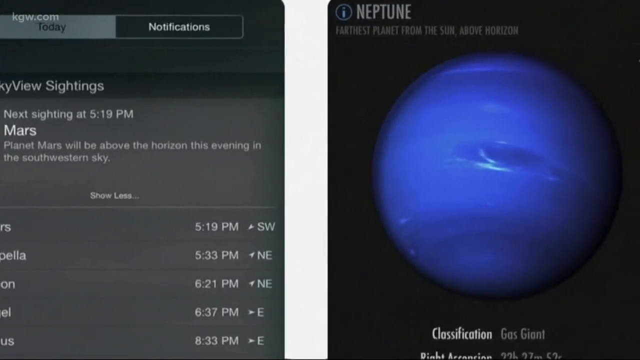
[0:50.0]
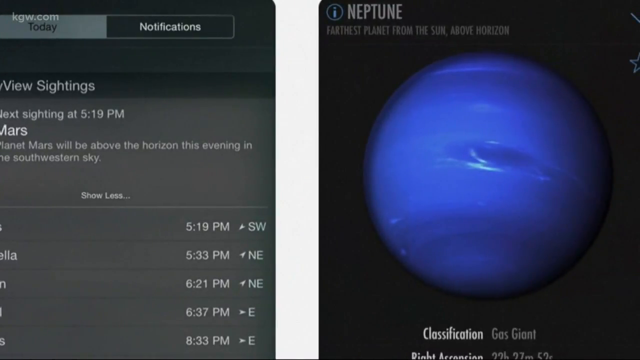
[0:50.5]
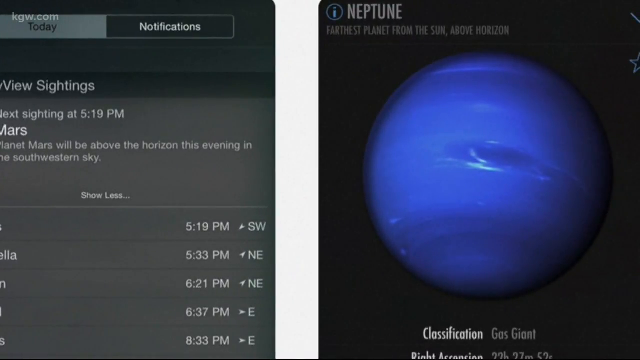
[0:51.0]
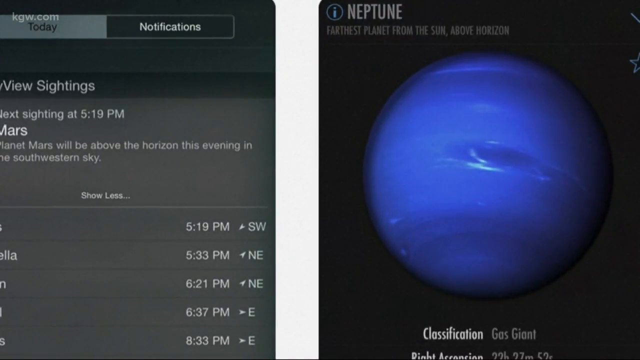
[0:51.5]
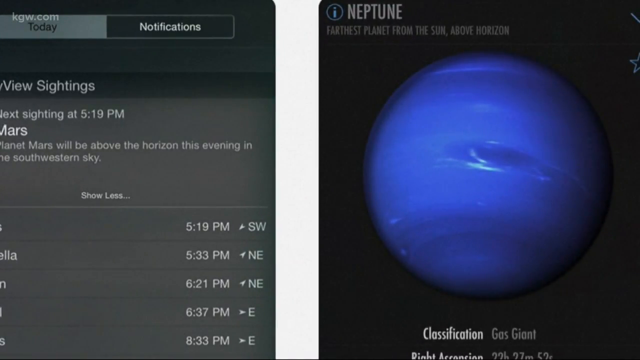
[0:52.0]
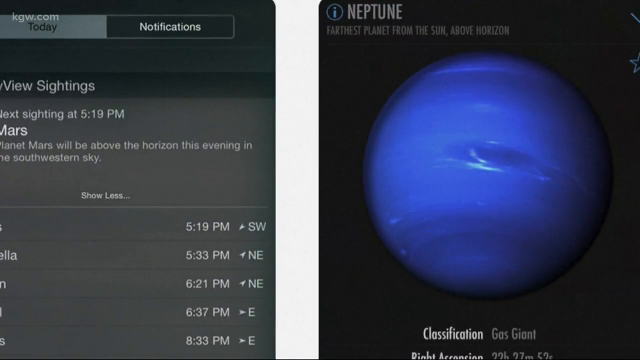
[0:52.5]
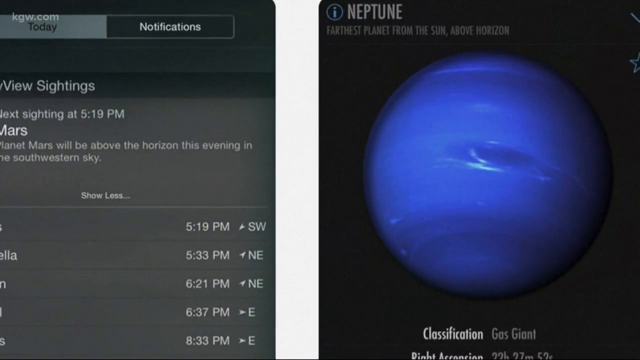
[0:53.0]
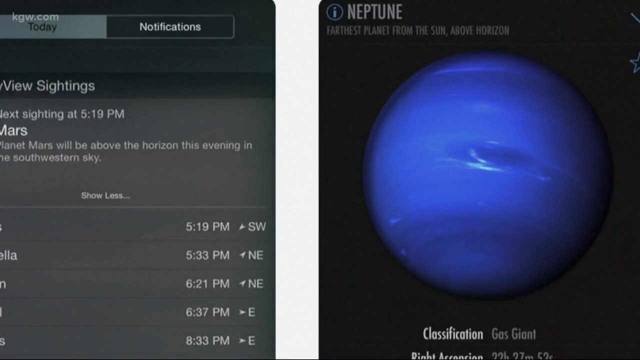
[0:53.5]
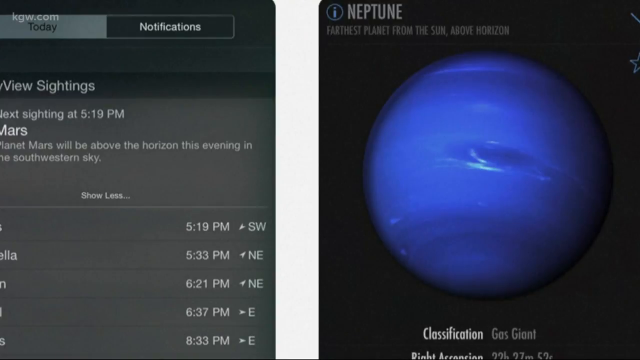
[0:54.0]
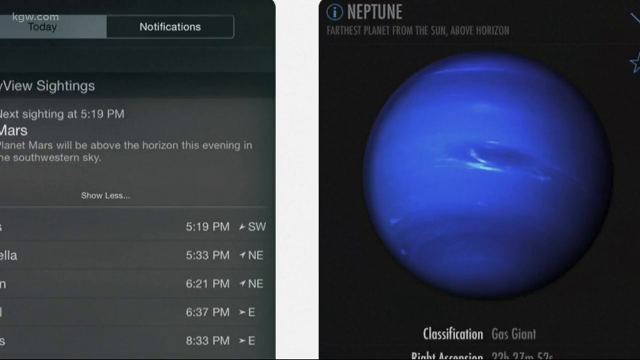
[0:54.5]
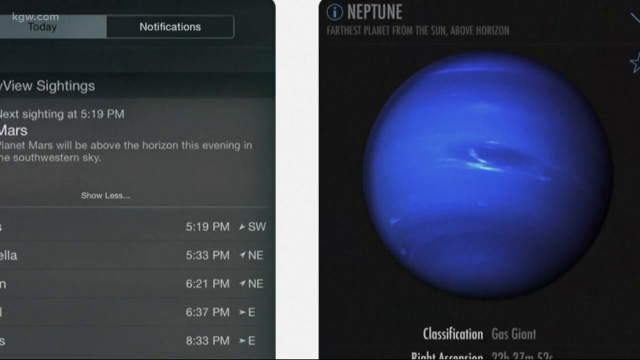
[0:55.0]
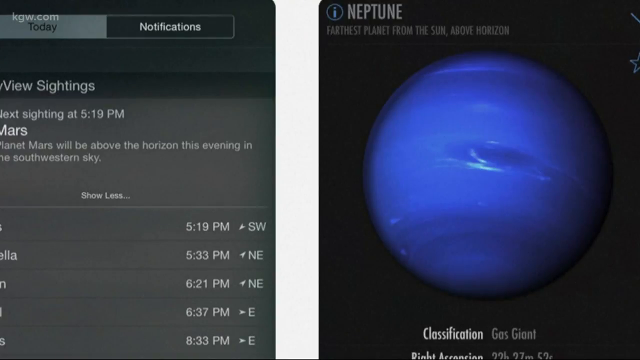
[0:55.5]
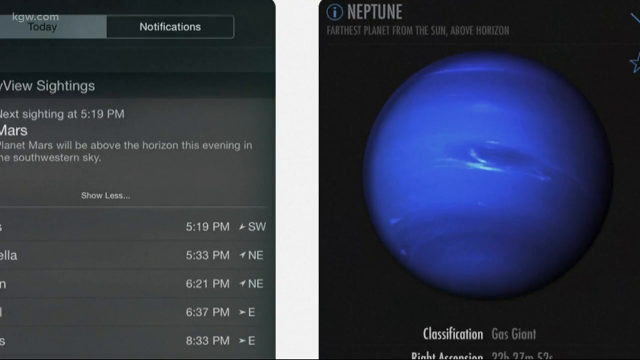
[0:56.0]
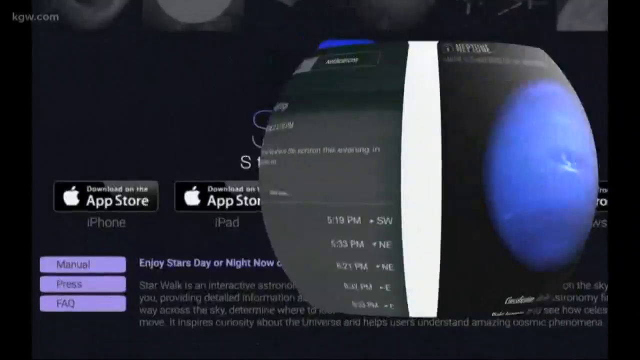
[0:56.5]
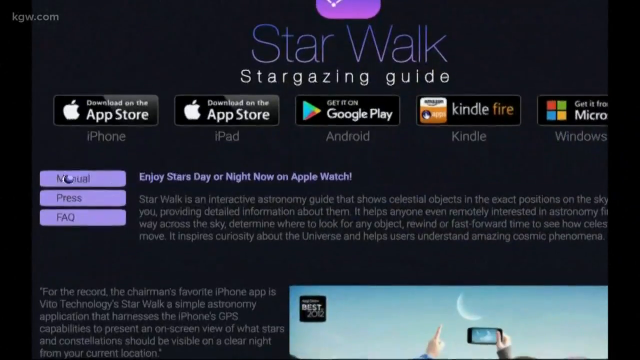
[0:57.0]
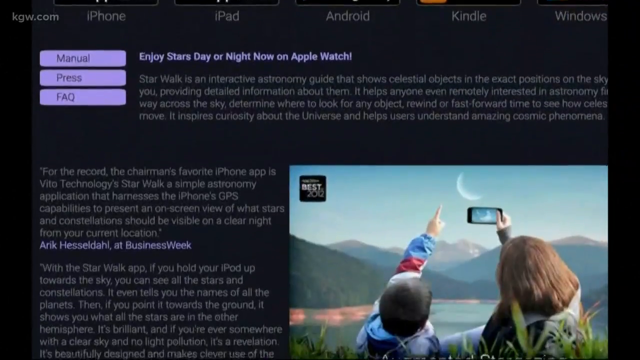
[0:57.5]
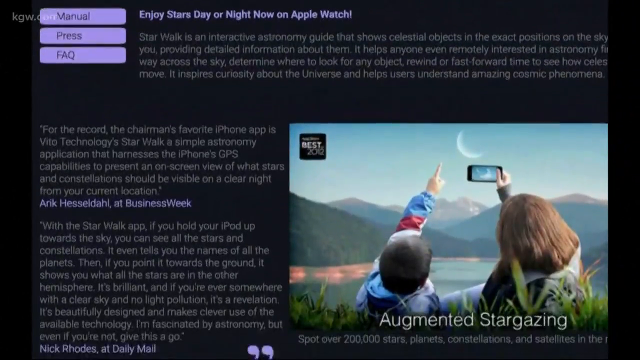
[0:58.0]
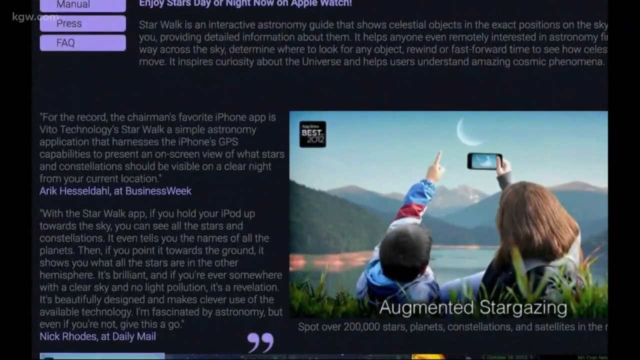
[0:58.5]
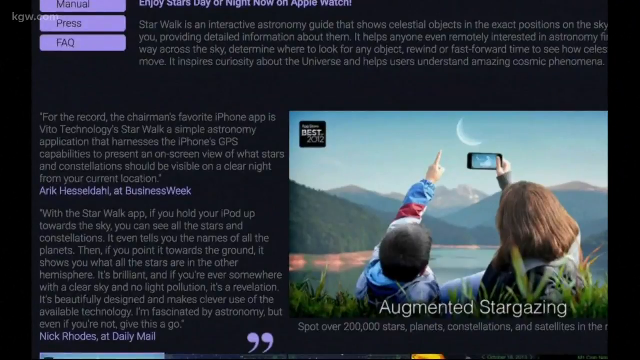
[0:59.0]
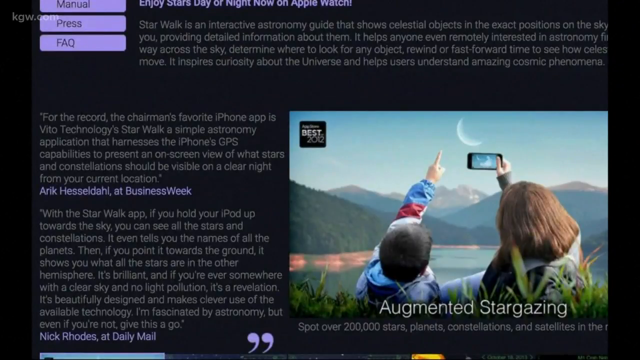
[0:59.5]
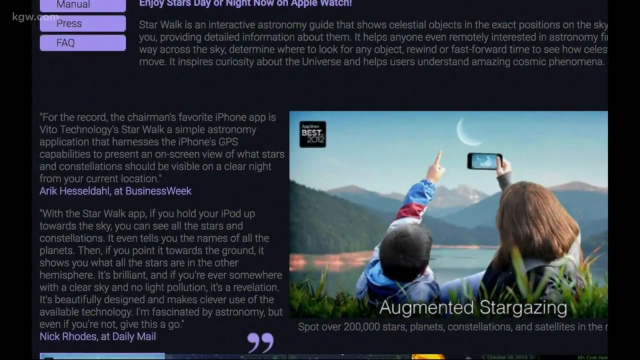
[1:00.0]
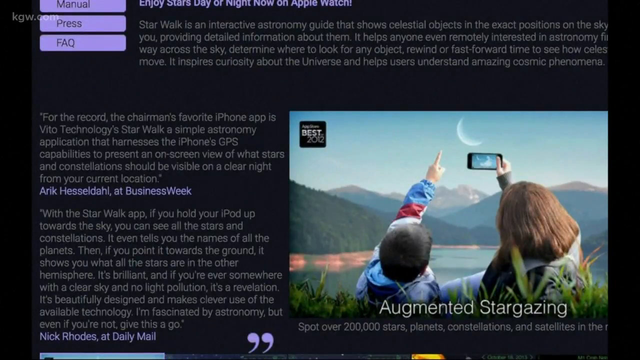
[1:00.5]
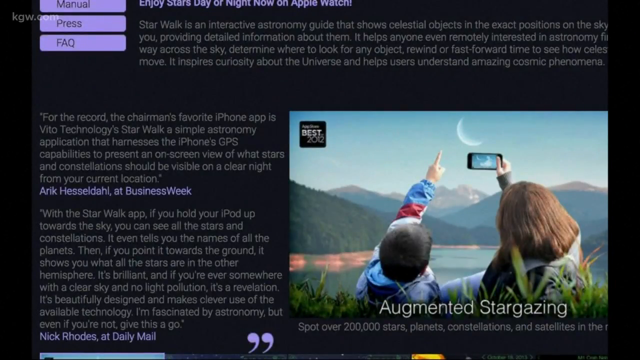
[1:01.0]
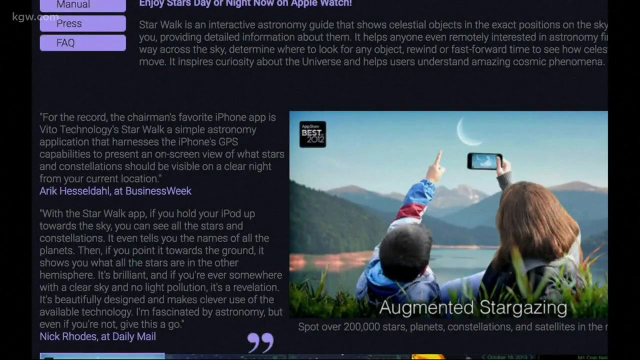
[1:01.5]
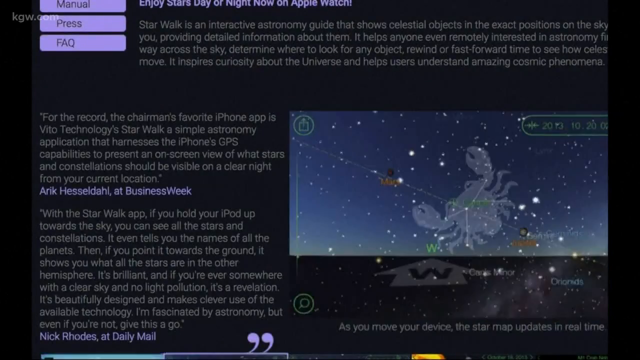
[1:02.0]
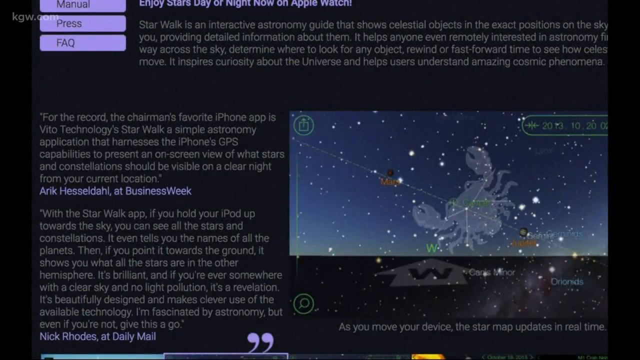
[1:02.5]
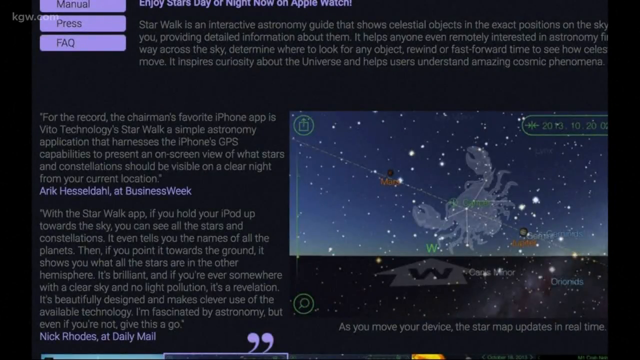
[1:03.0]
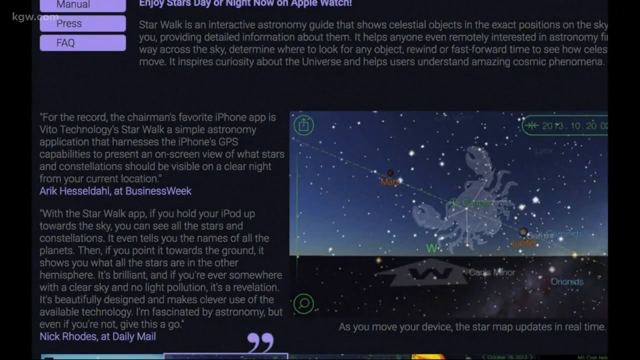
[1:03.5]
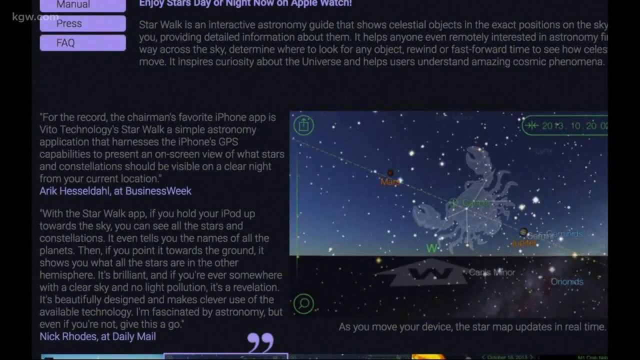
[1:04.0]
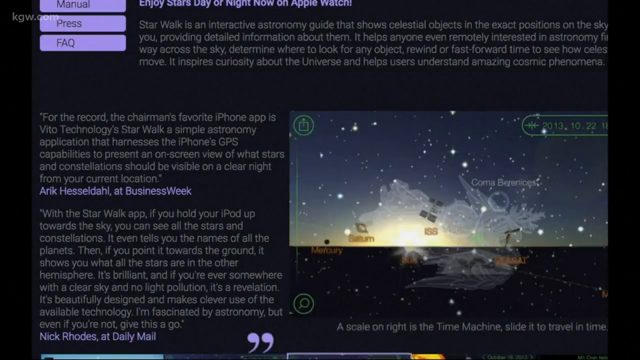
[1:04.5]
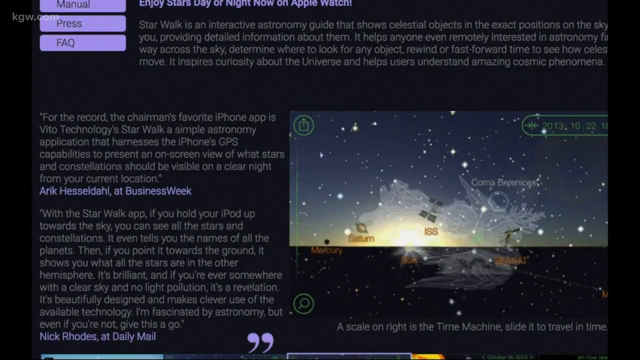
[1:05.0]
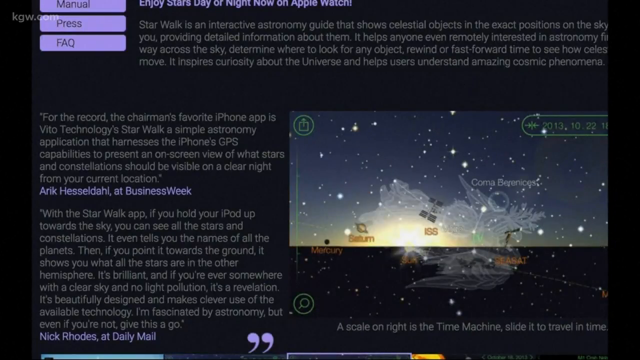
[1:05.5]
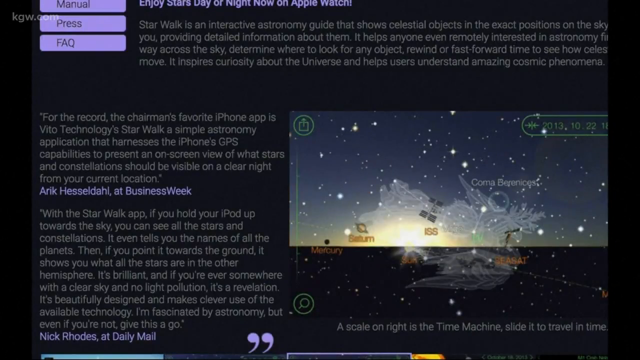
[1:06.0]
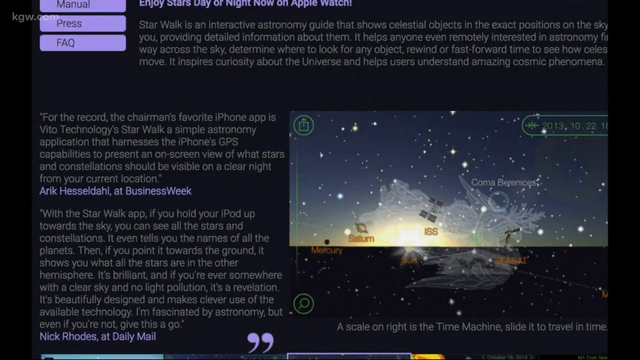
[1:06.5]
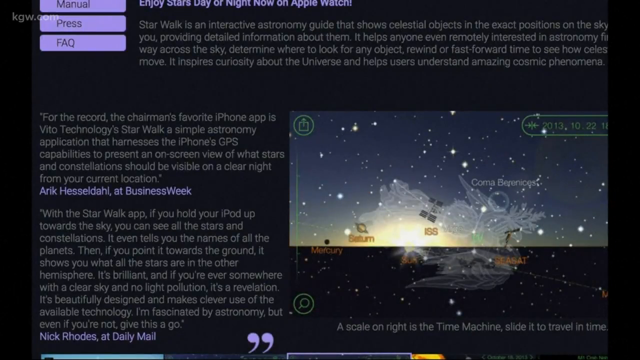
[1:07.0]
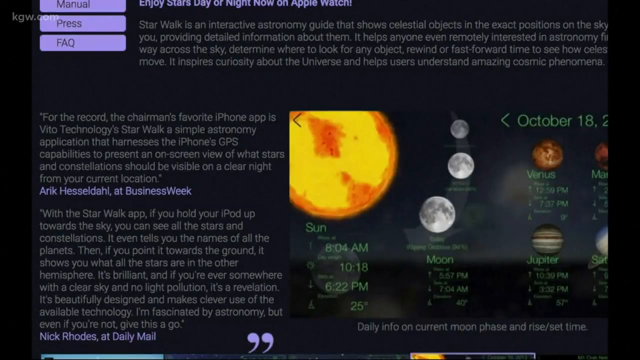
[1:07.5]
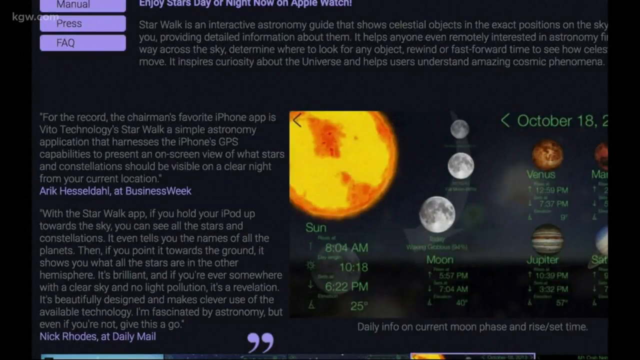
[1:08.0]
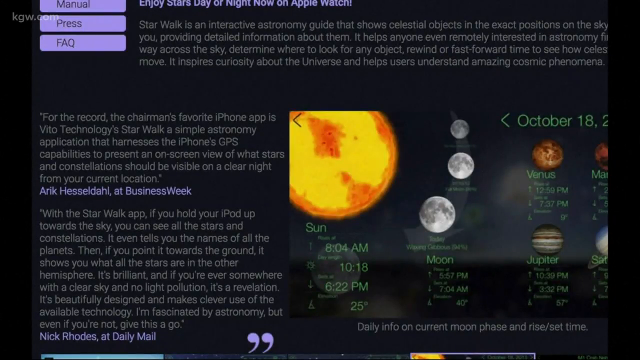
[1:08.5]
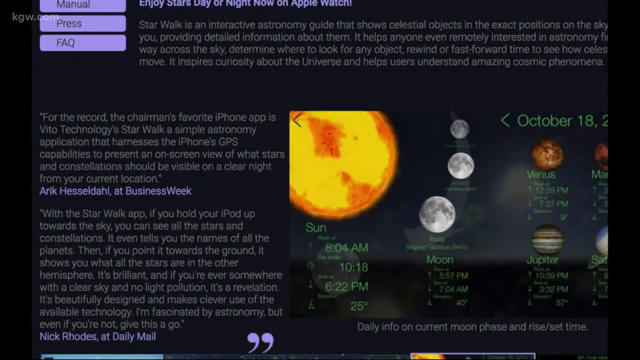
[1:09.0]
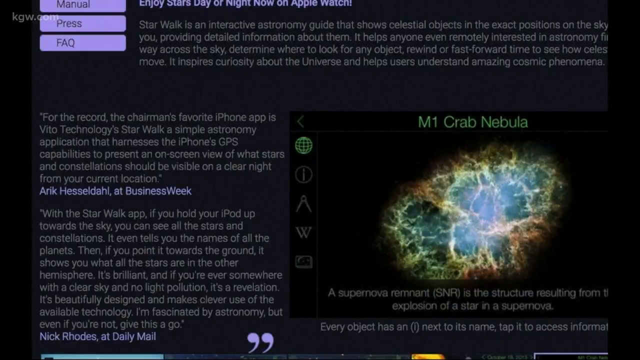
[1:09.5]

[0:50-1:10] The last of the scrolling telephone screens is on the left-hand side, headed "Skyview sightings", with information below reading "next sighting at 5.19pm" and "Mars" below that. The right half of the screen has an exclamation mark in a circle in its top left, then "Neptune", with the information "the farthest planet from the Sun above horizon" below. In the center of a black screen is a graphic of a bright blue planet, and at the bottom is the classification "gas giant". These images stay on screen for a little while and are then replaced by a border at the top with "iPhone, iPad, Android, Kindle, and Windows" spaced above its top line. Below that is some information on Star Walk, an interactive astronomy guide. In the bottom right corner is a photo-type graphic of what looks like a mother and child facing away from the camera. The child points to the sky, toward a crescent moon, and the mother holds a camera phone in her right hand, thumb on the outline bar and fingers wrapped around the front so they are obscured from view. Text at the bottom of the image reads "augmented stargazing", with text below it reading "spot over 200,000 stars, planets, constellations, and satellites in the".